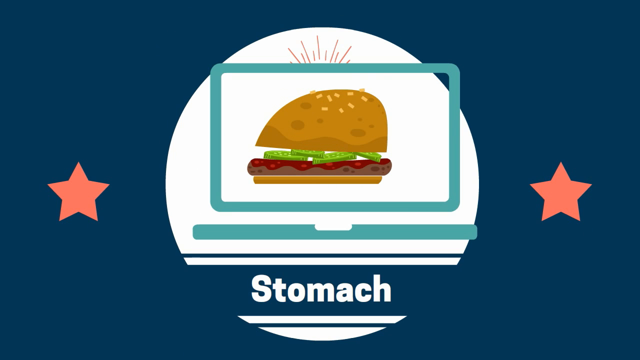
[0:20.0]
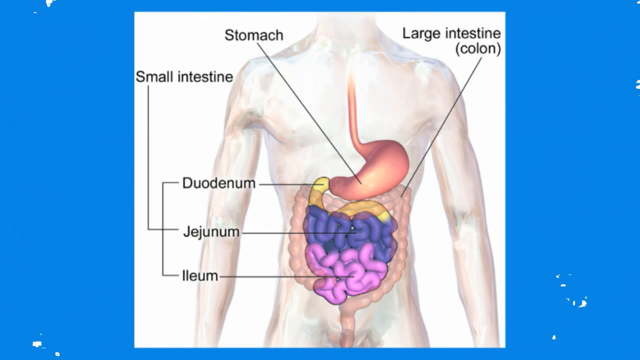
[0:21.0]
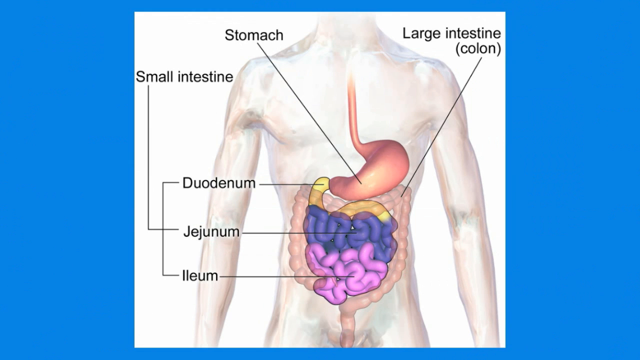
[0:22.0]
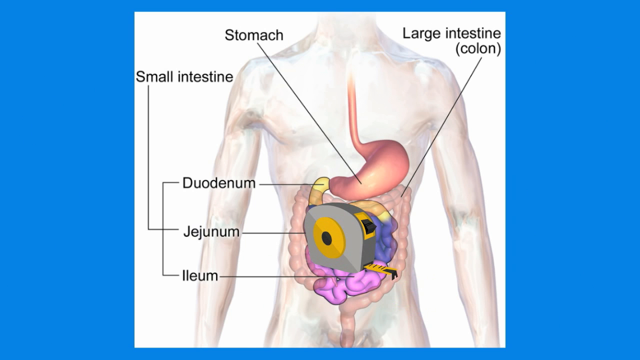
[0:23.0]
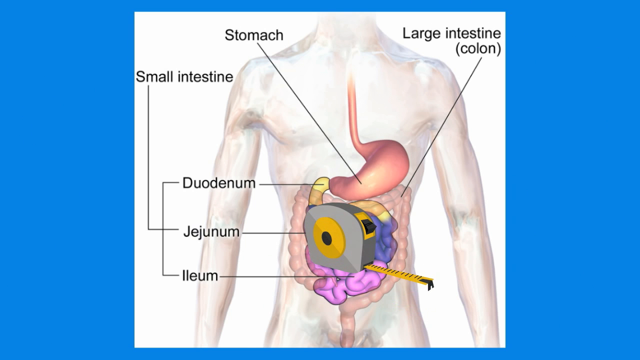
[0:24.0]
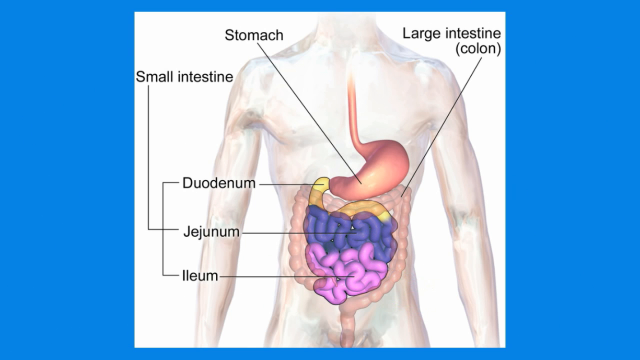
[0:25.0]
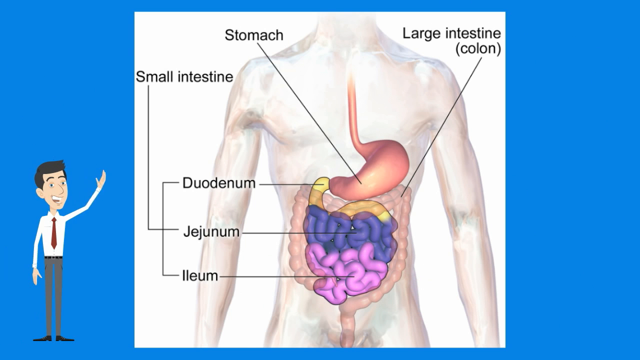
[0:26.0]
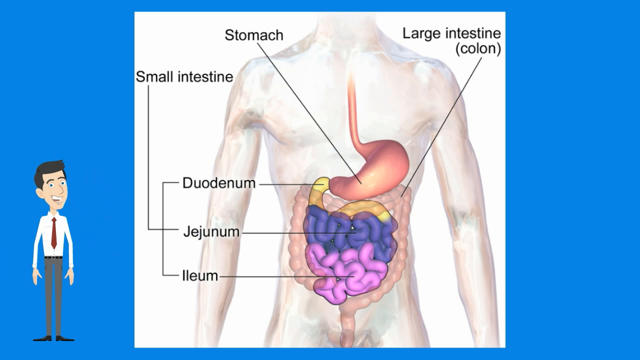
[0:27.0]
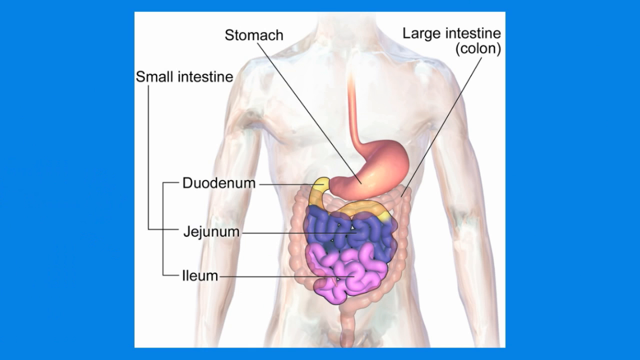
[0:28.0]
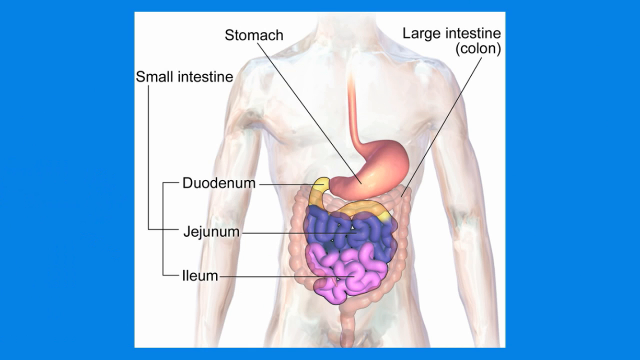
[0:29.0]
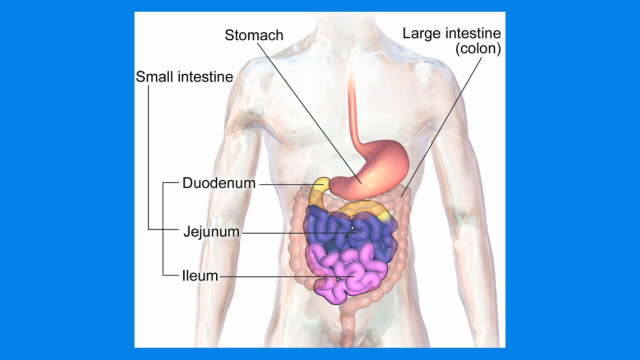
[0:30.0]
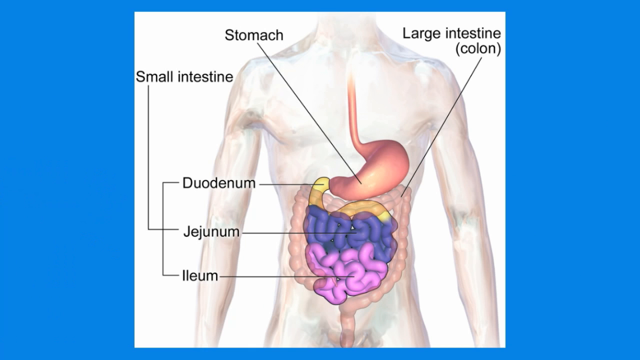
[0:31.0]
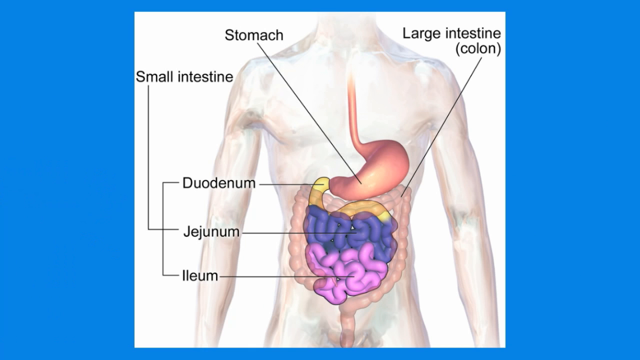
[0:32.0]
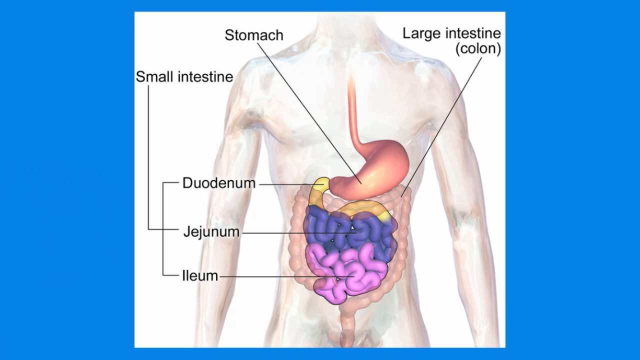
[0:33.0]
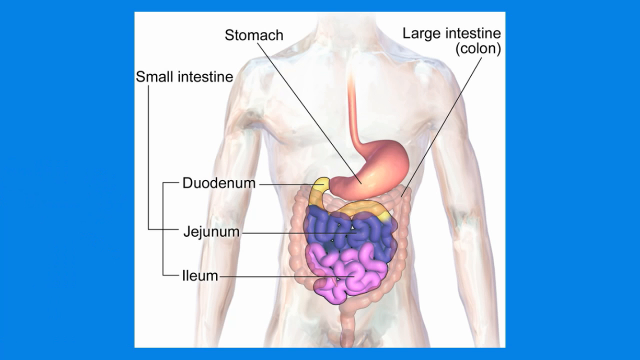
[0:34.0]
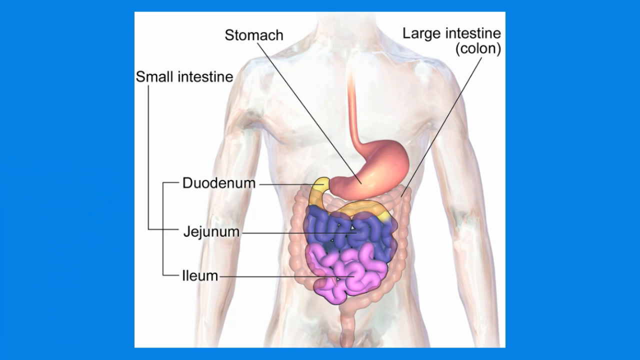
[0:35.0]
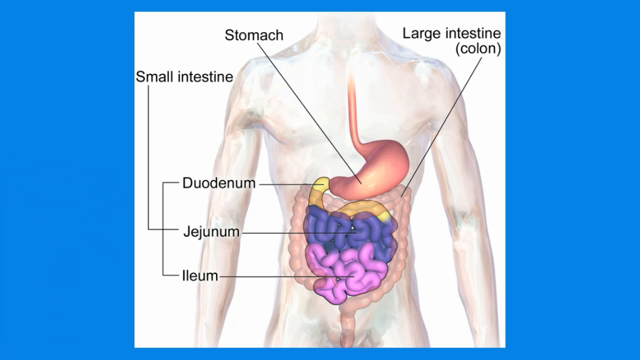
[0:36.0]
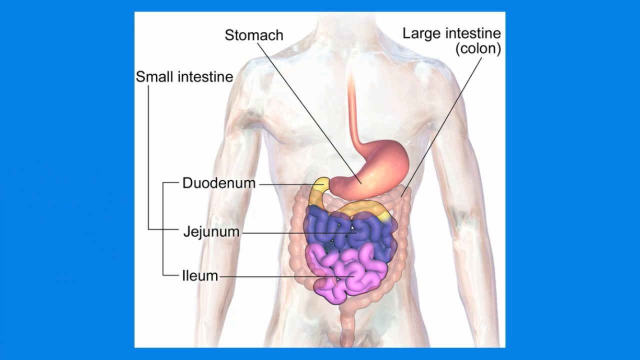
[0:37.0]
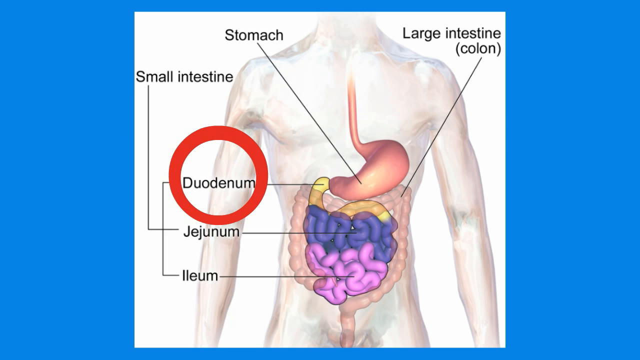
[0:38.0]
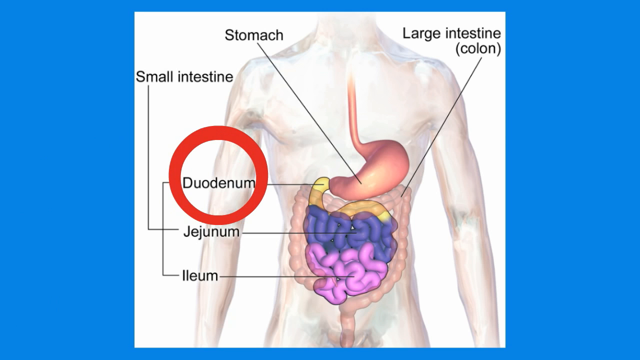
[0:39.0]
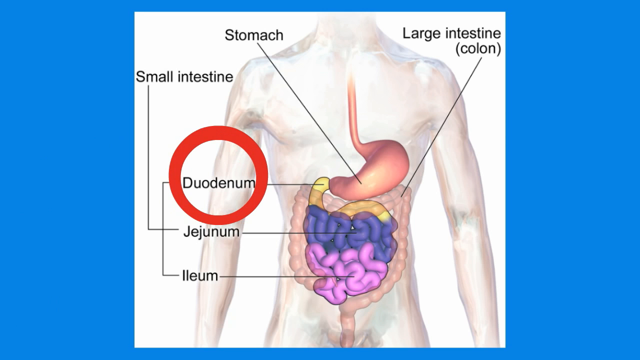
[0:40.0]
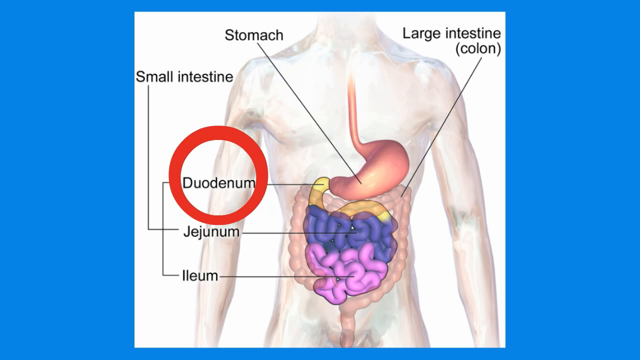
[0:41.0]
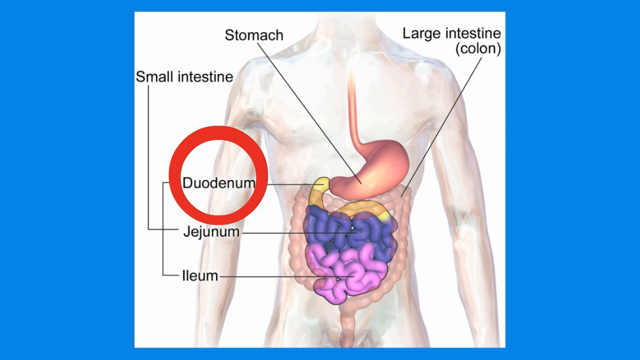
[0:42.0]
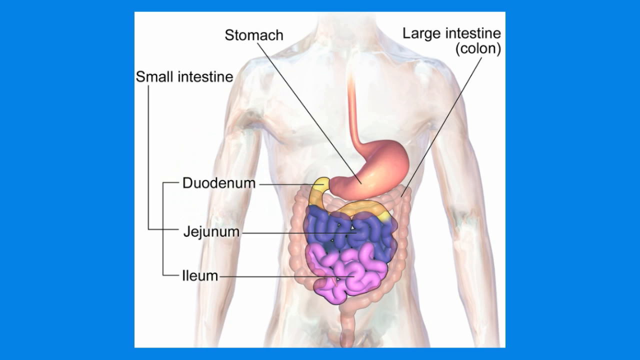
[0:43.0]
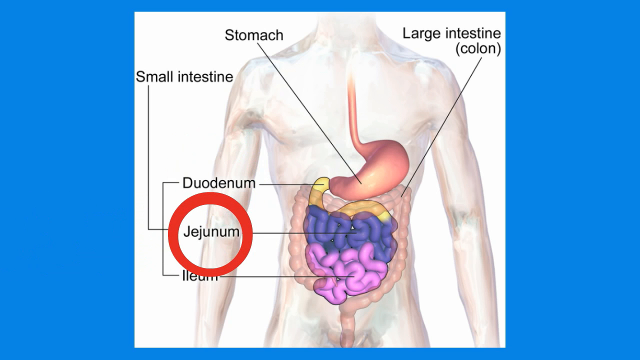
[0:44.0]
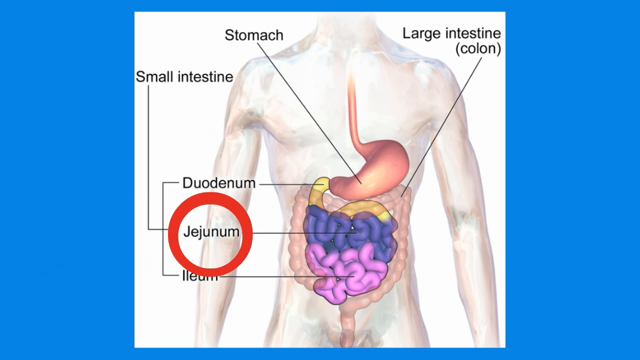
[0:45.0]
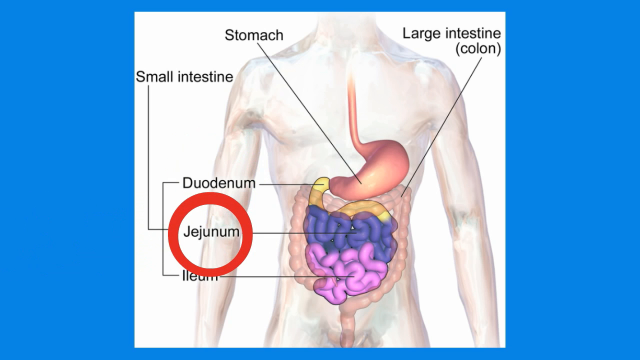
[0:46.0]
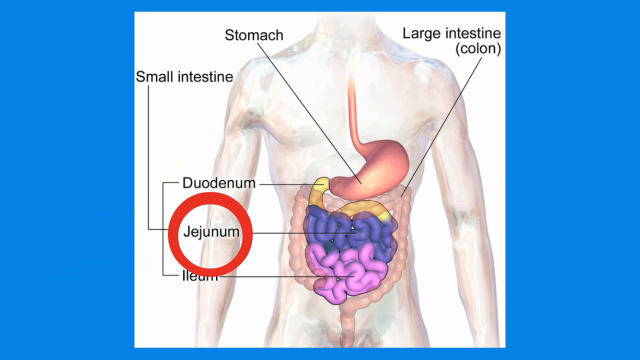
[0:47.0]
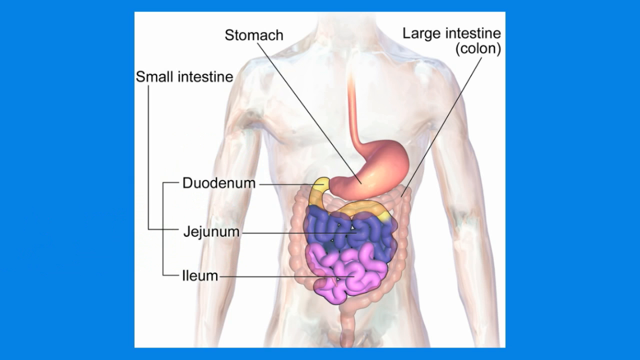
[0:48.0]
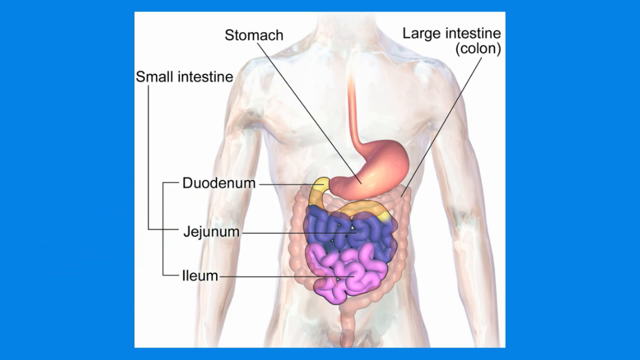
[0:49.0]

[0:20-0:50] A cloud of smoke very slowly turns to reveal a rectangular image set on a blue background. The image shows a human figure with some internal organs, each connected by a thin black line to black writing naming that organ. At one point an image of a subway appears more or less in the center of the frame, and then a stylized man in a white shirt, a red tie and gray pants appears at the left end of the image, gesticulating with his hand and pointing to the image in the center. A thick red circle then appears and stops on the words "duodenum", "jejunum" and "Ileum". The animations are quite fluid, and all the information is perfectly readable.